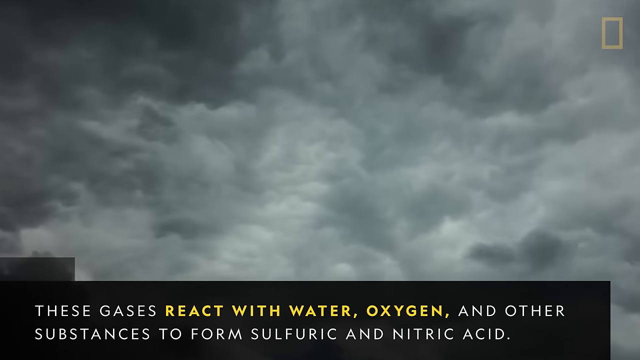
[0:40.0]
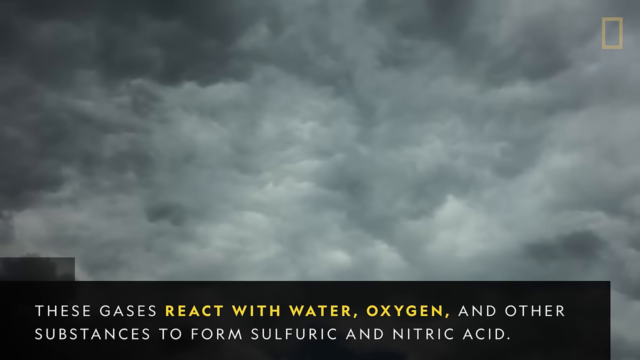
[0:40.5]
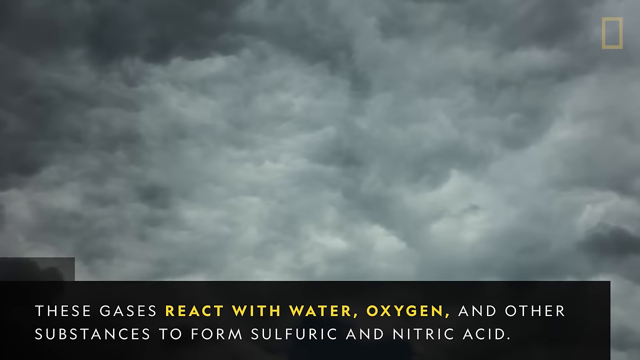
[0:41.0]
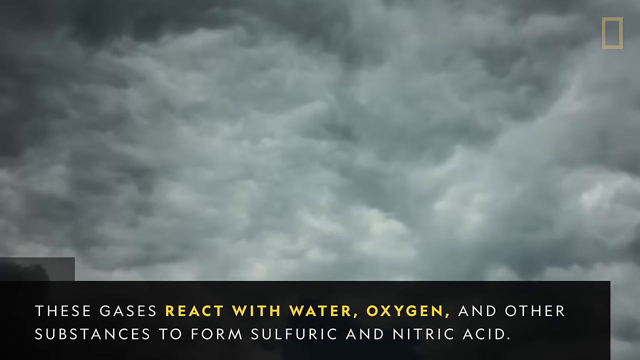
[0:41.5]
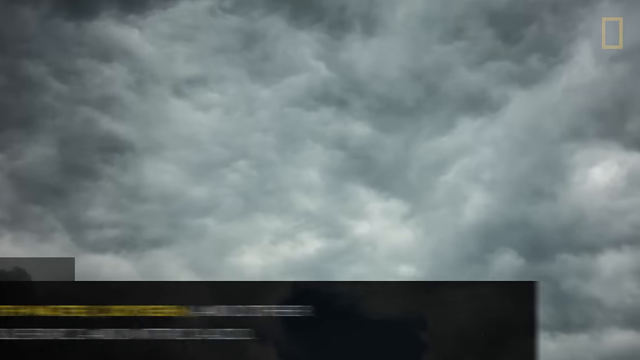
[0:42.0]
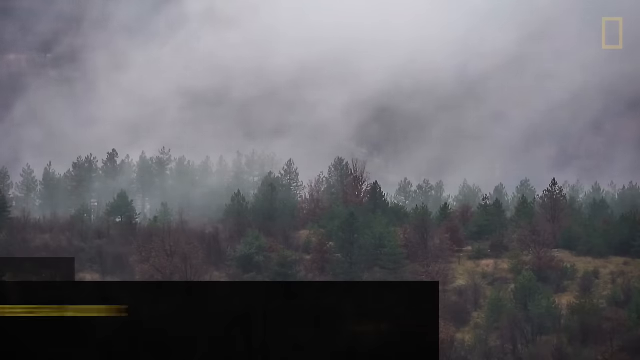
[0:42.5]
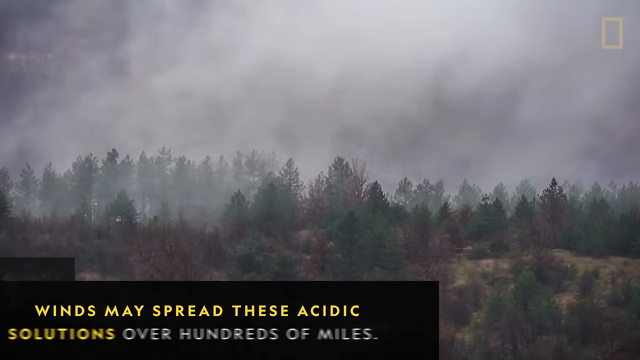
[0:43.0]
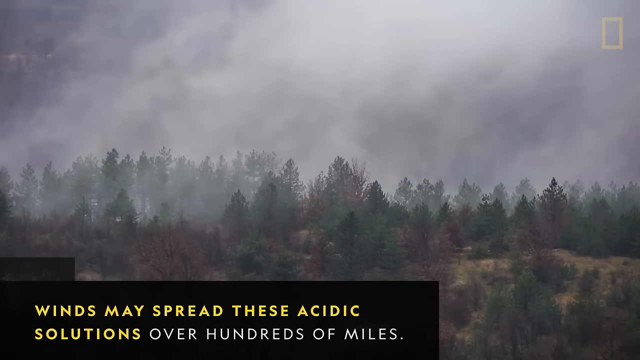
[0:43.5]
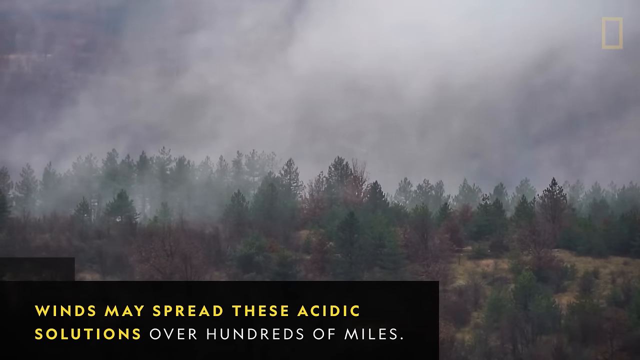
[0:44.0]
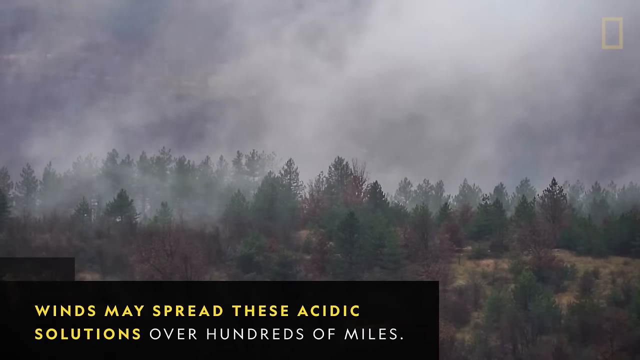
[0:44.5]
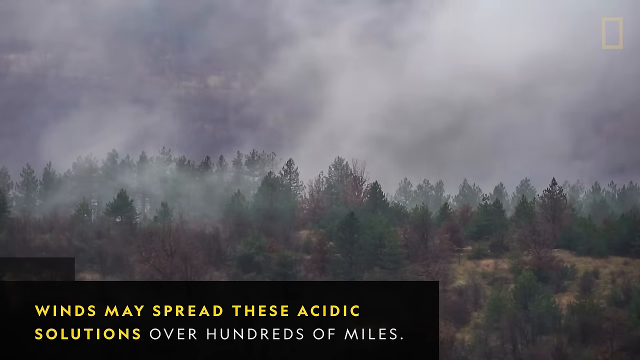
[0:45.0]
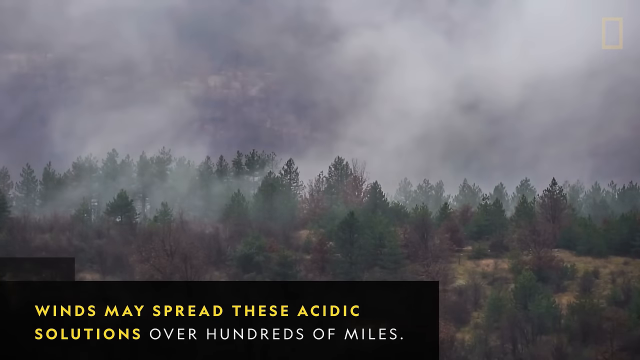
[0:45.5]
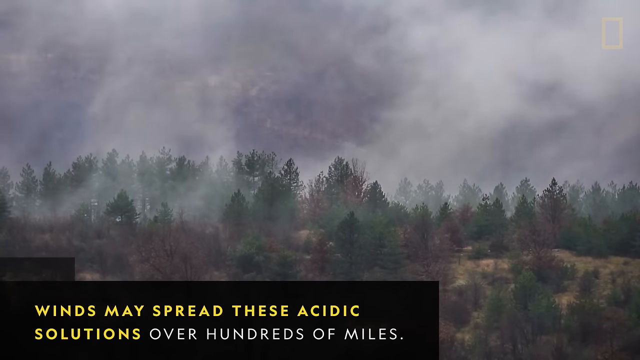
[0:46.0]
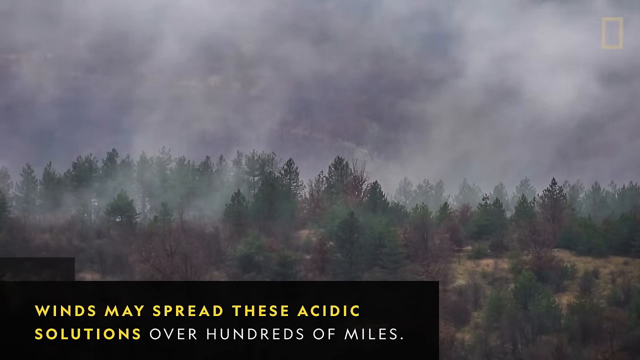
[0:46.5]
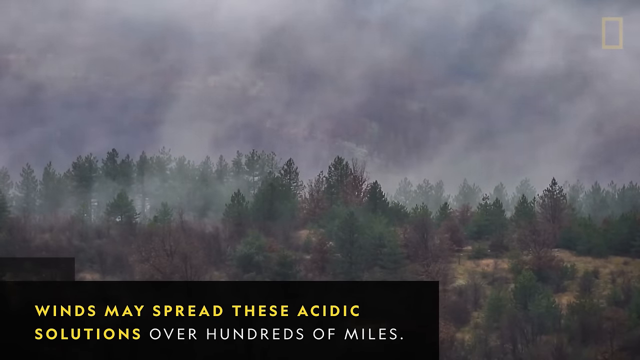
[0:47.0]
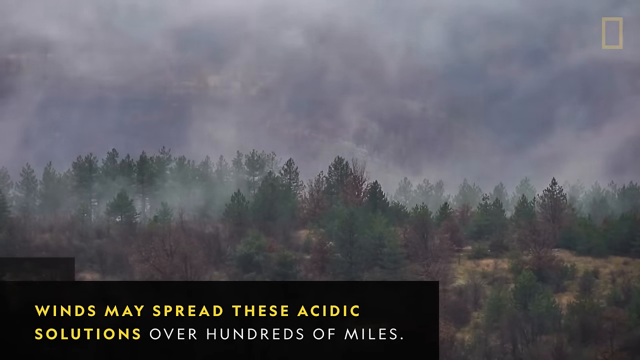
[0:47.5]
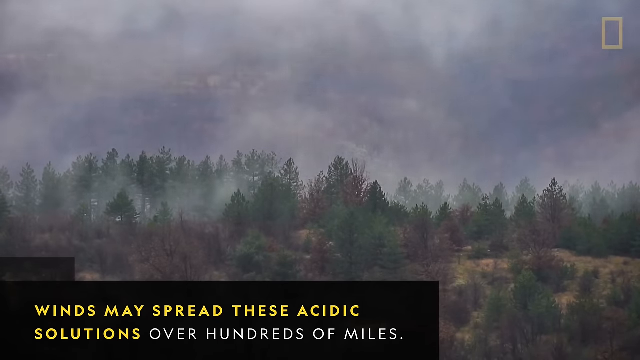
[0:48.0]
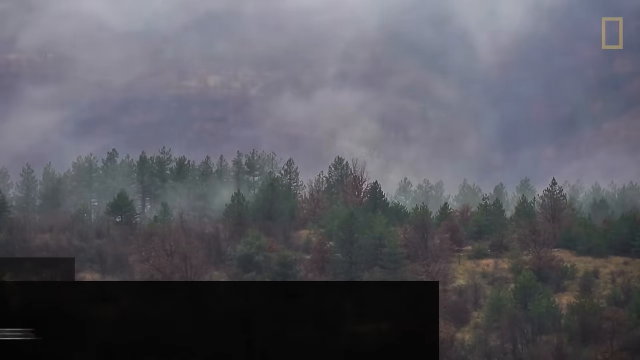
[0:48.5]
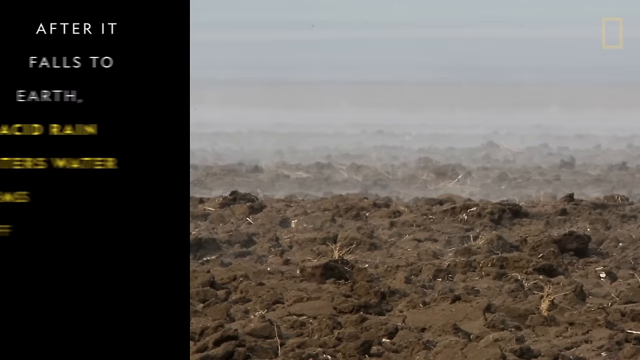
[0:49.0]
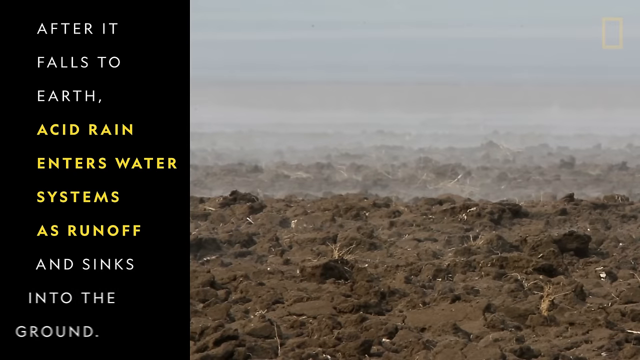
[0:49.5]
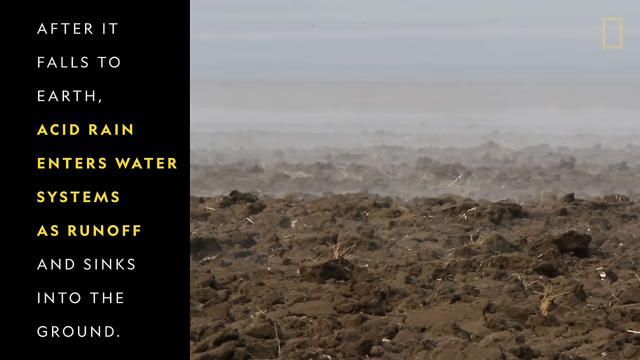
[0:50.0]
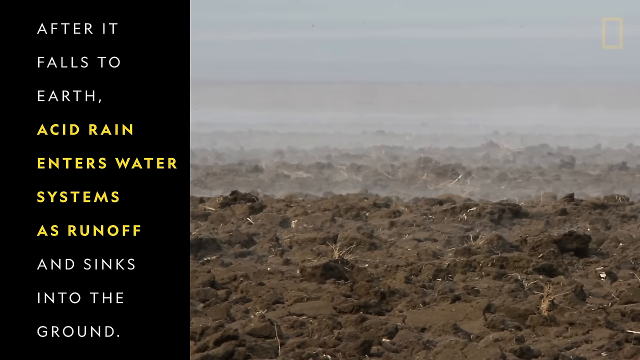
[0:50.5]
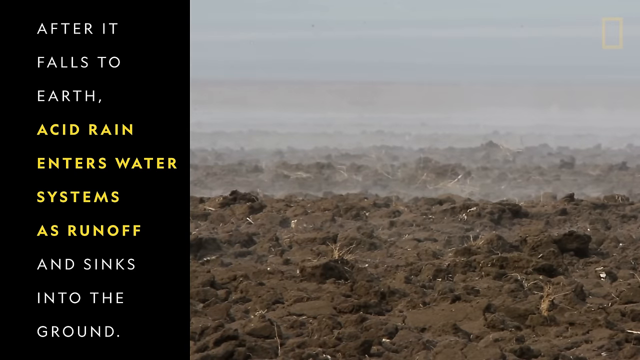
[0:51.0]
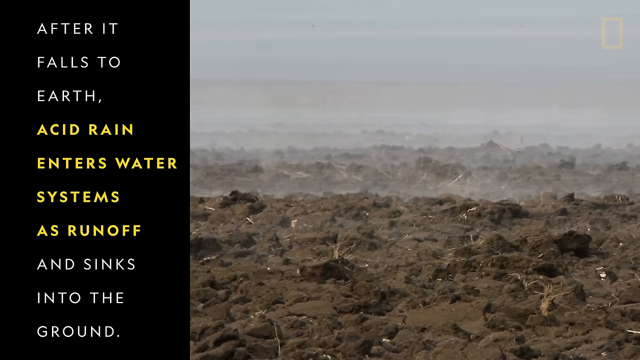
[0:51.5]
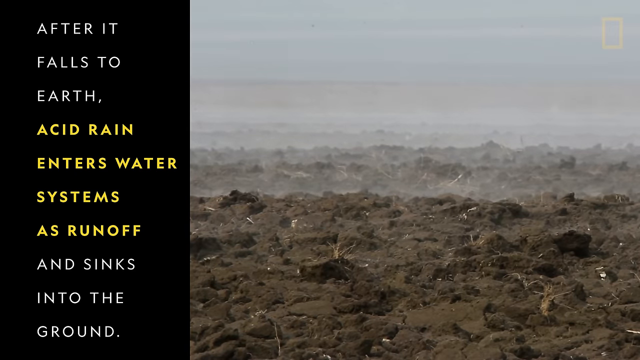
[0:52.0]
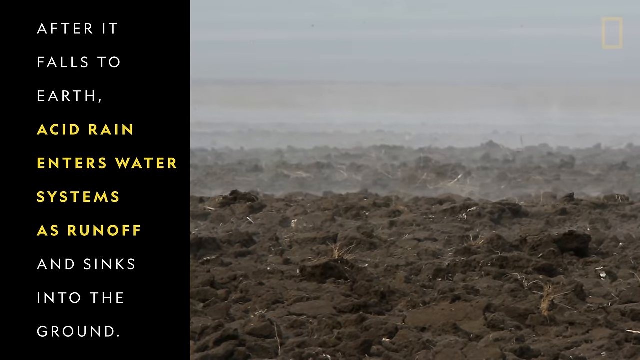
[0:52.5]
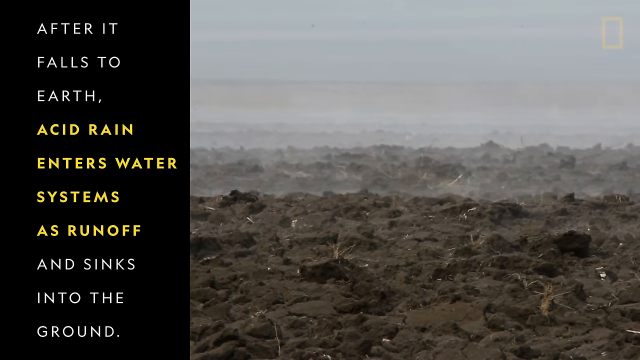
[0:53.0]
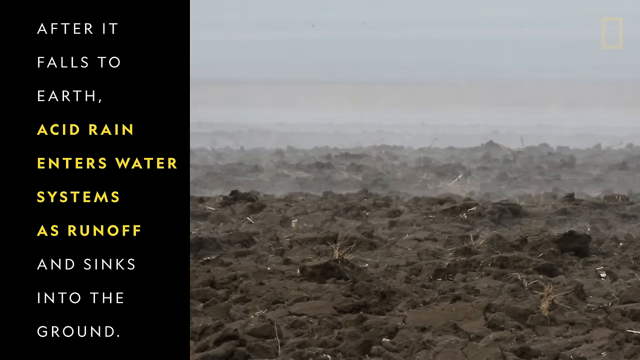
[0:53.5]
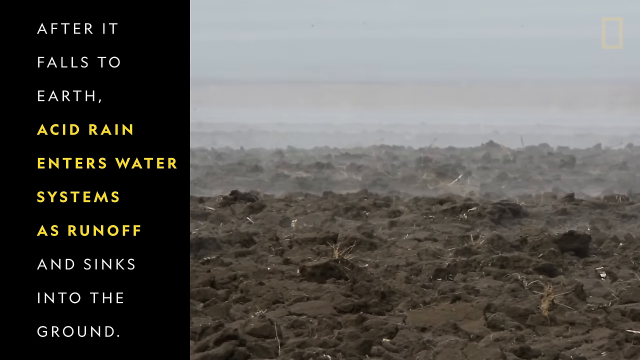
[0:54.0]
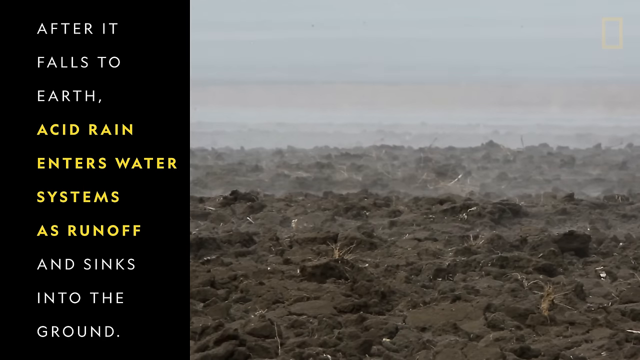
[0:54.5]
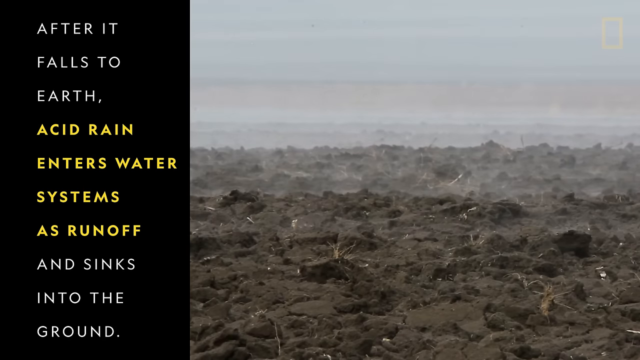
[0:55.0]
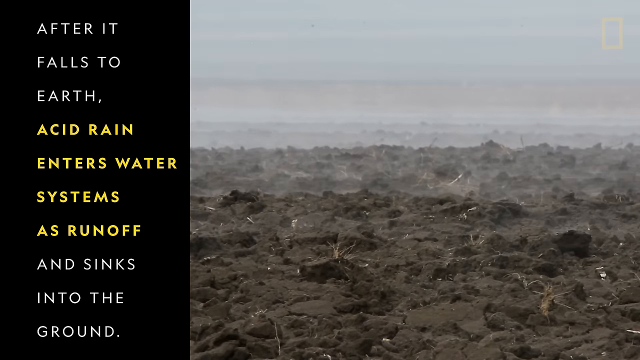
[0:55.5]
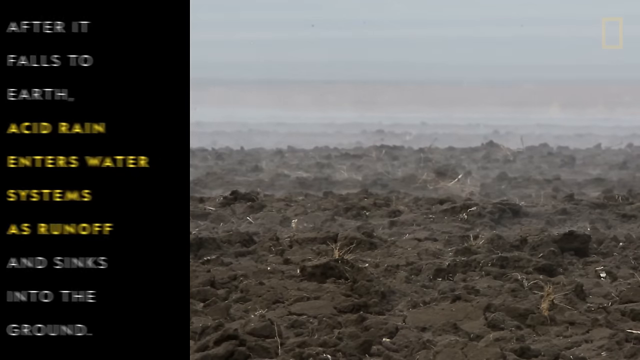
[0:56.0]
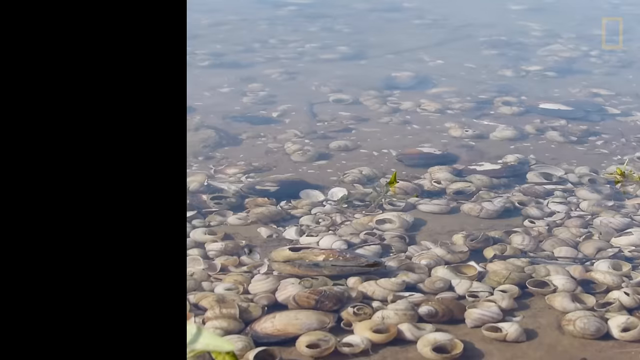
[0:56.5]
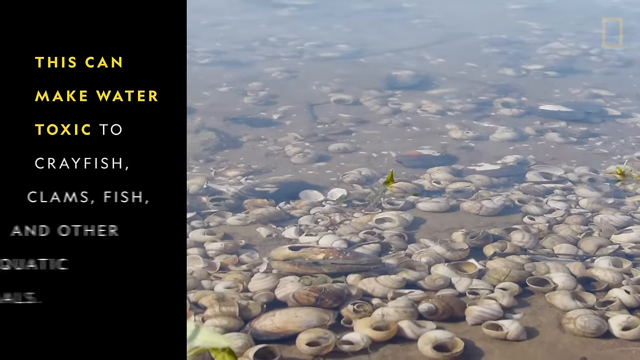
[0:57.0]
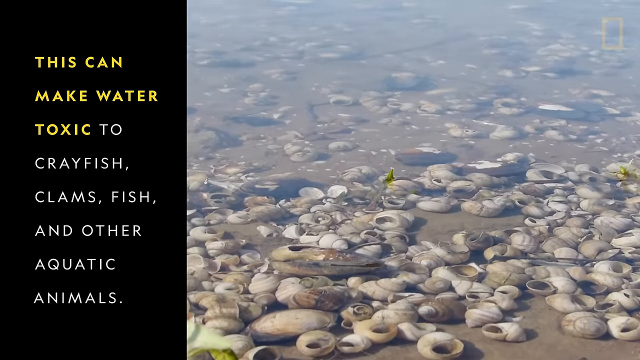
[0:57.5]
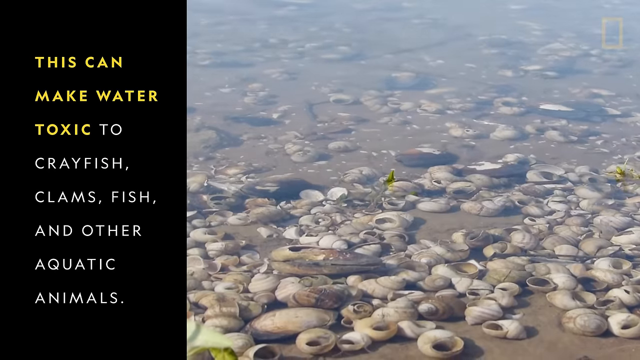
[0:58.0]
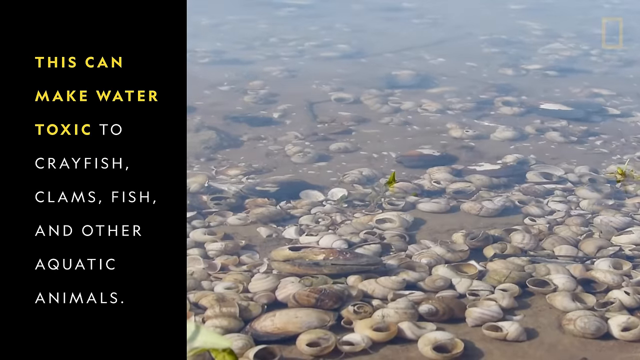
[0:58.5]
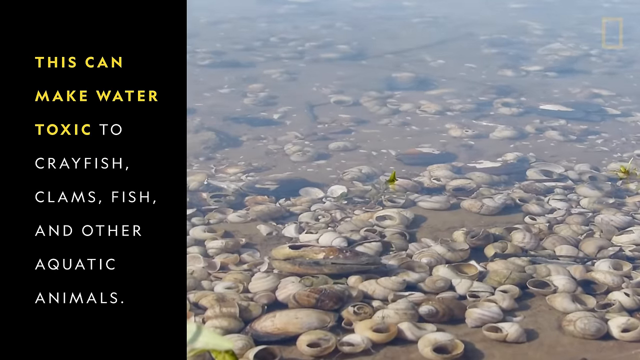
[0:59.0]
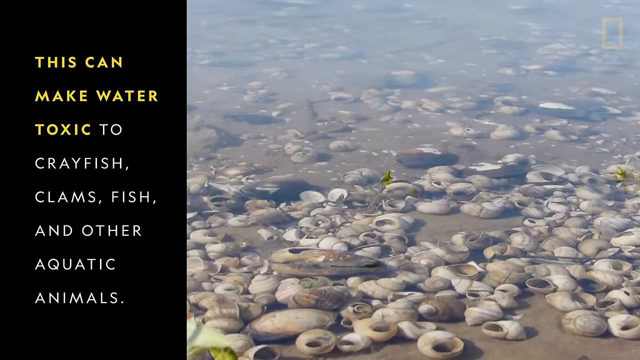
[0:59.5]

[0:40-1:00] Ominous skies appear, with smoke that looks AI-generated. Pollution spreads across a rural or countryside environment and then across the ocean, with a mention that it is toxic to crayfish. Visuals and written text describe the effects of acid rain on environments and on fish and aquatic animals, noting that it reacts with water and that winds spread the acidic solutions over hundreds of miles.